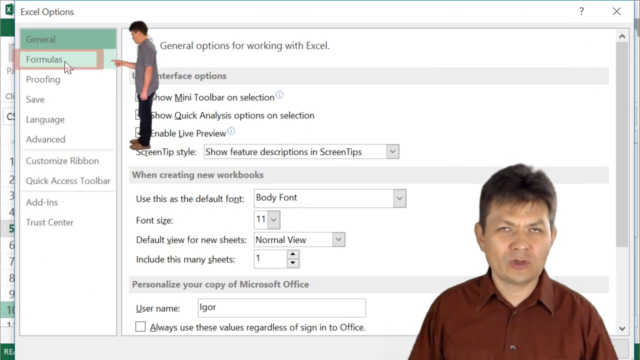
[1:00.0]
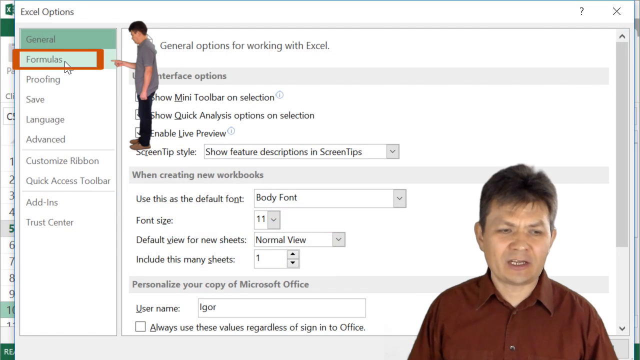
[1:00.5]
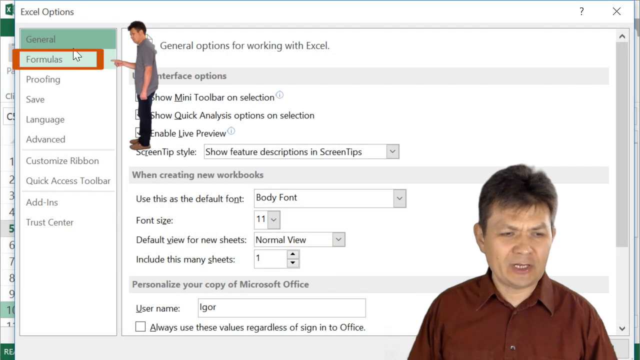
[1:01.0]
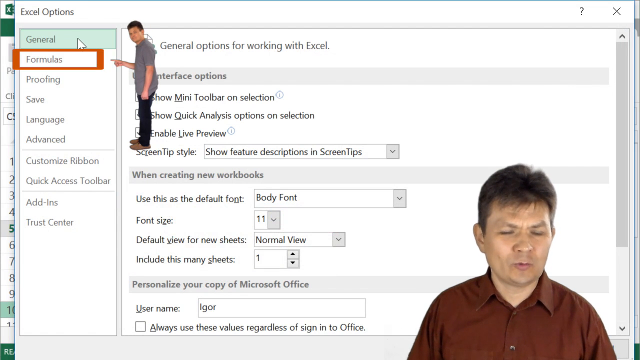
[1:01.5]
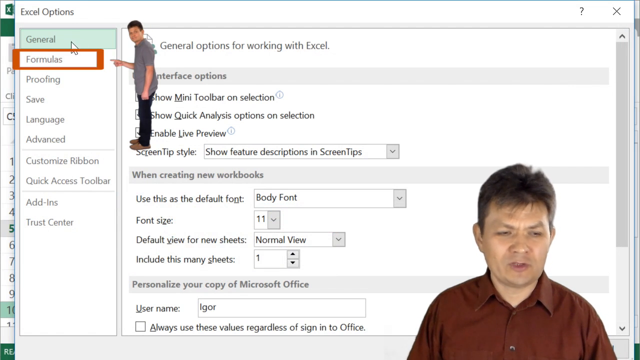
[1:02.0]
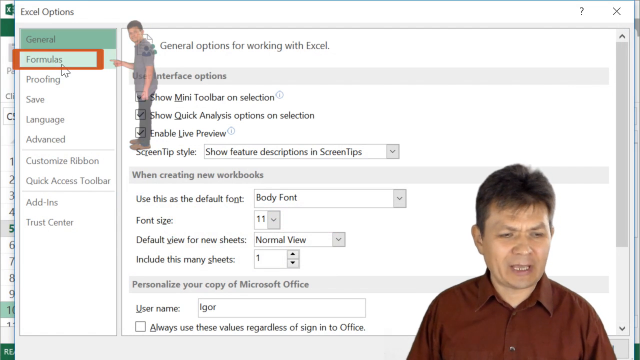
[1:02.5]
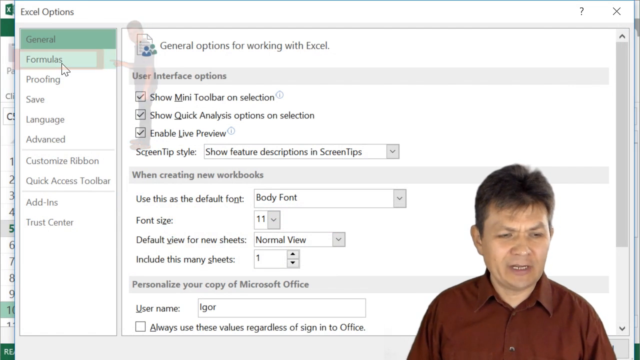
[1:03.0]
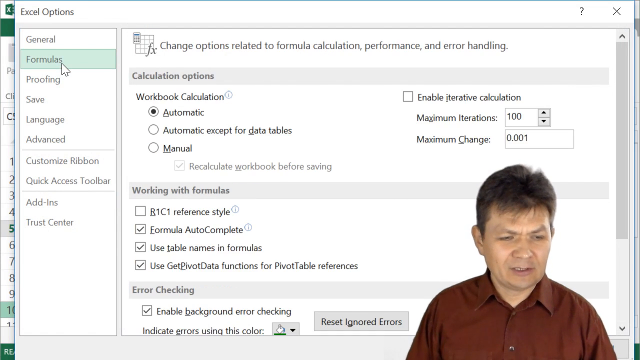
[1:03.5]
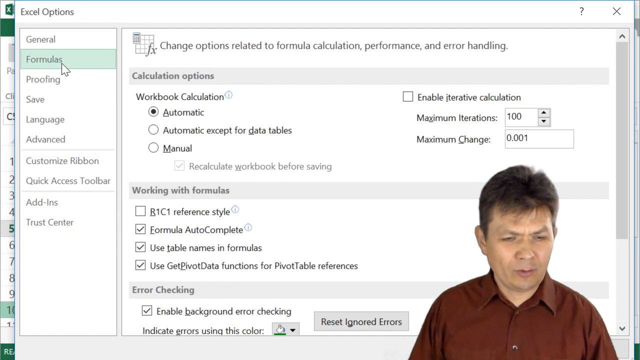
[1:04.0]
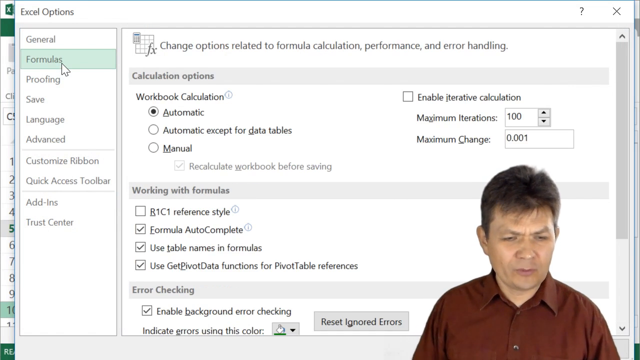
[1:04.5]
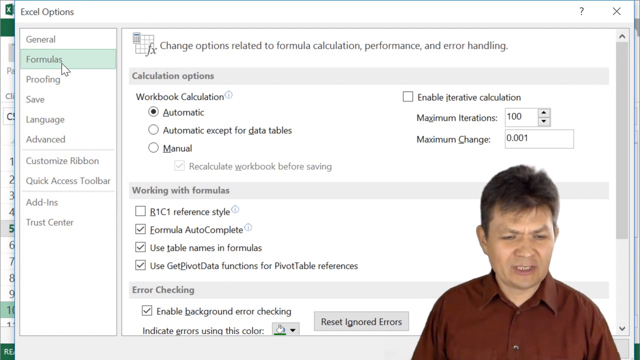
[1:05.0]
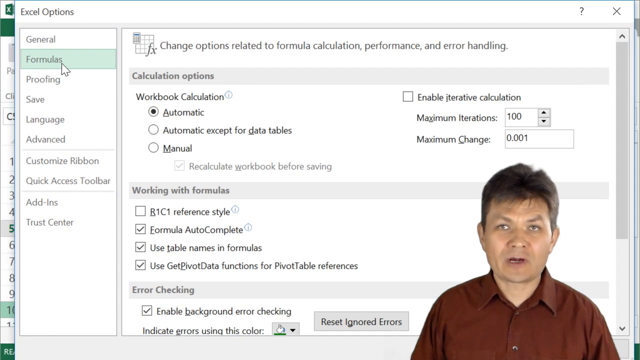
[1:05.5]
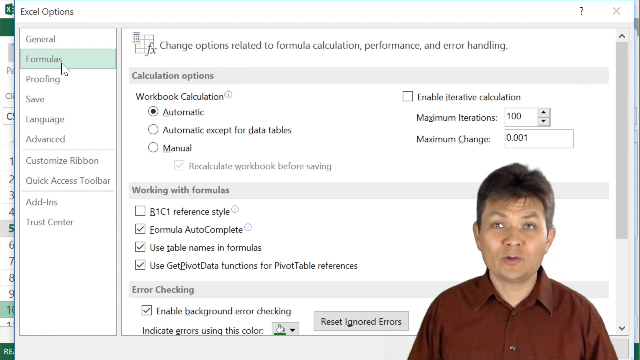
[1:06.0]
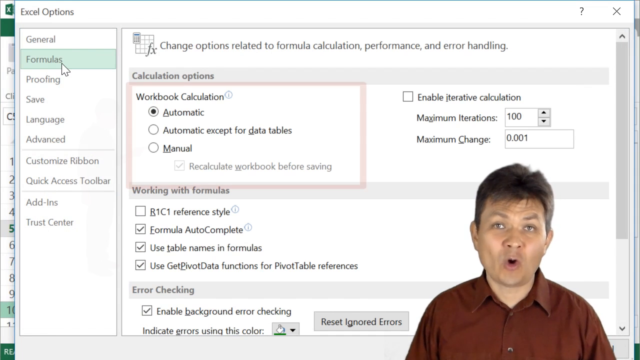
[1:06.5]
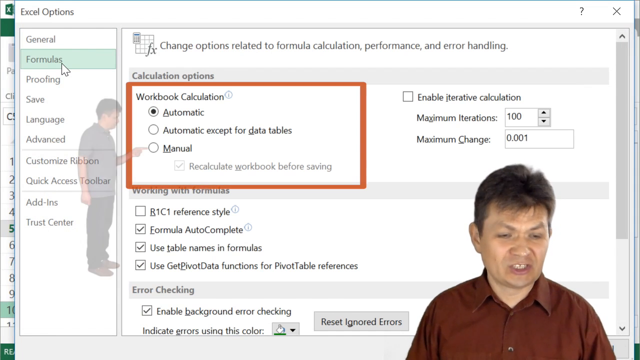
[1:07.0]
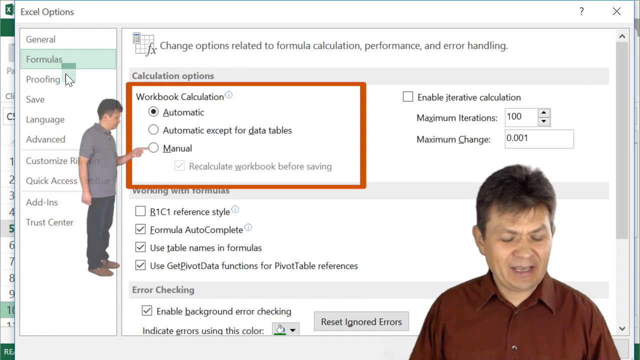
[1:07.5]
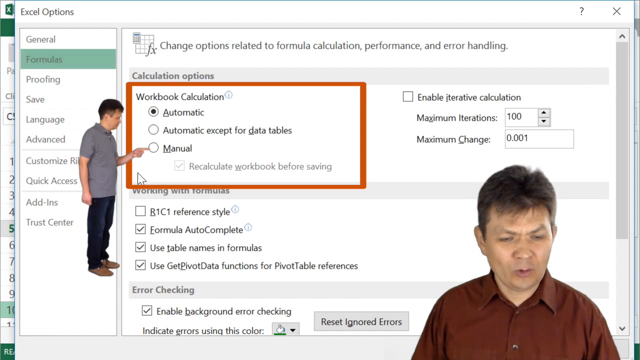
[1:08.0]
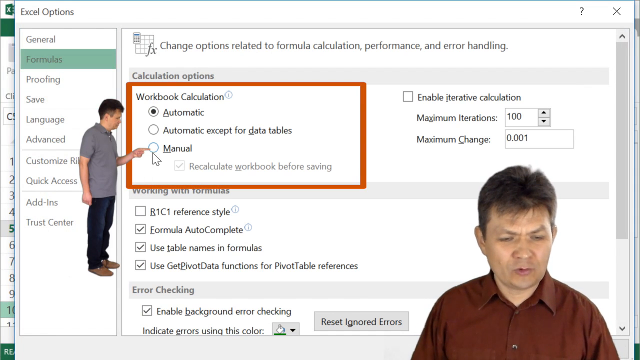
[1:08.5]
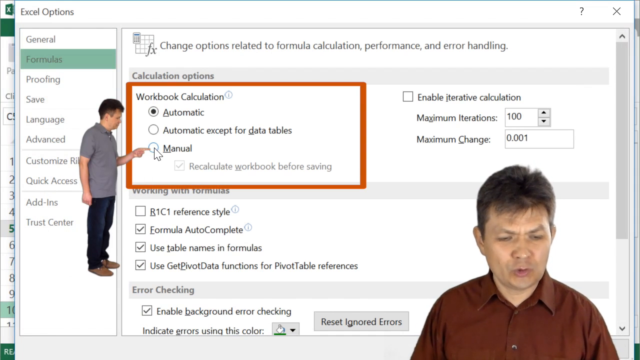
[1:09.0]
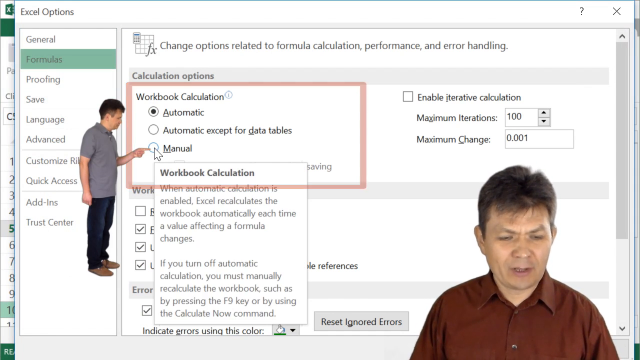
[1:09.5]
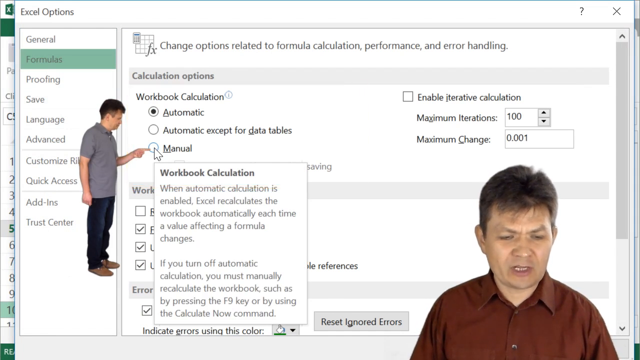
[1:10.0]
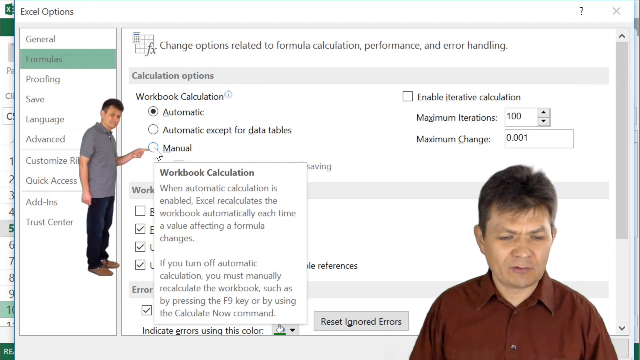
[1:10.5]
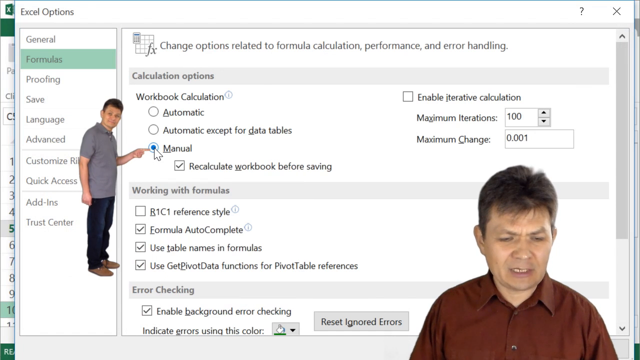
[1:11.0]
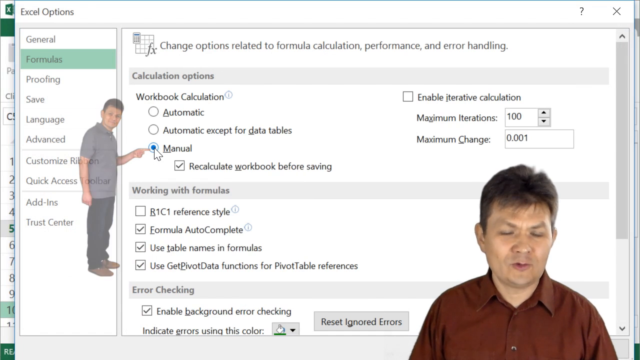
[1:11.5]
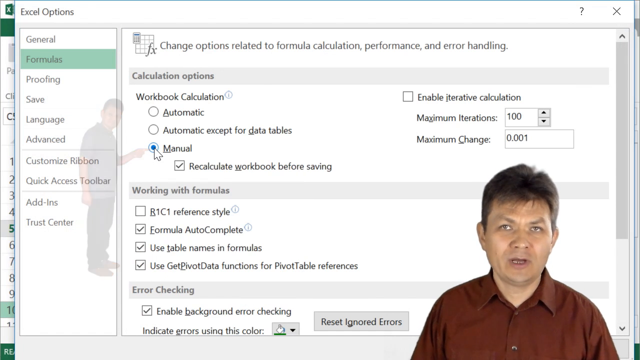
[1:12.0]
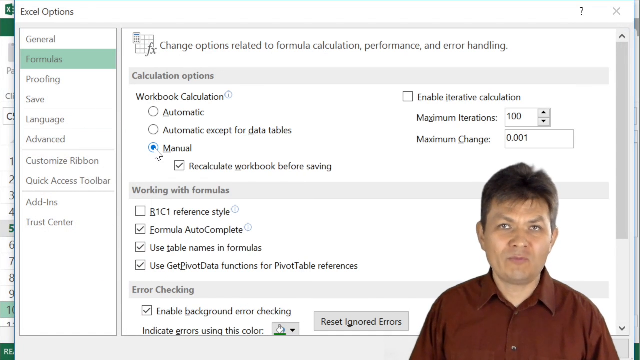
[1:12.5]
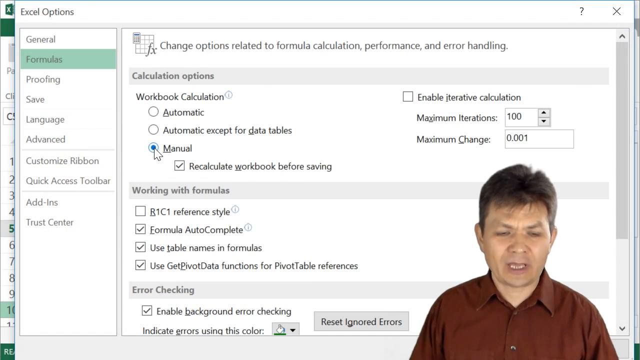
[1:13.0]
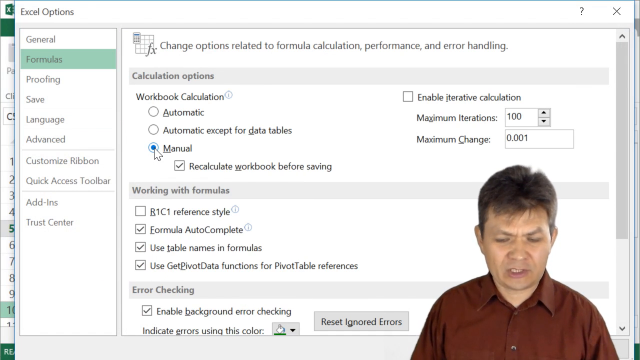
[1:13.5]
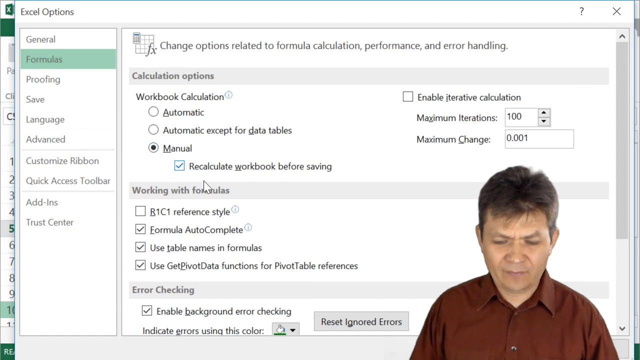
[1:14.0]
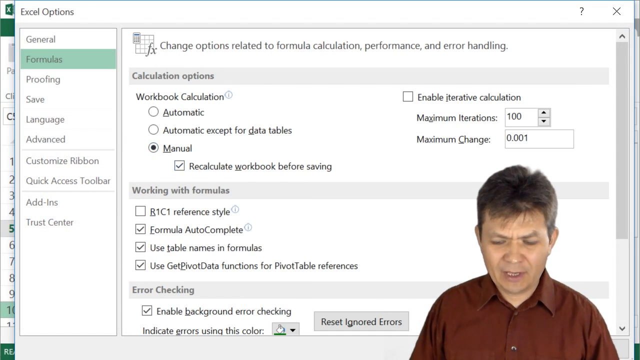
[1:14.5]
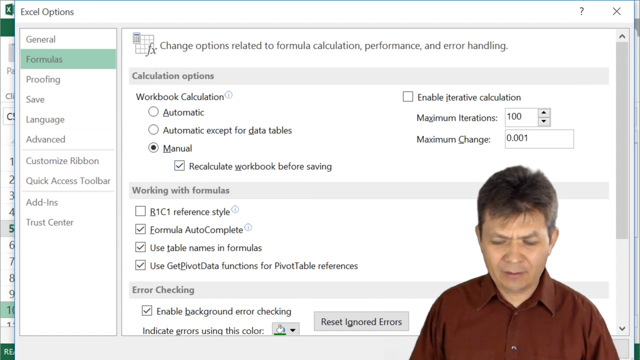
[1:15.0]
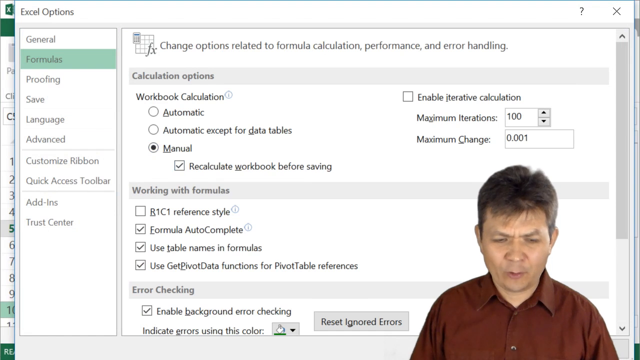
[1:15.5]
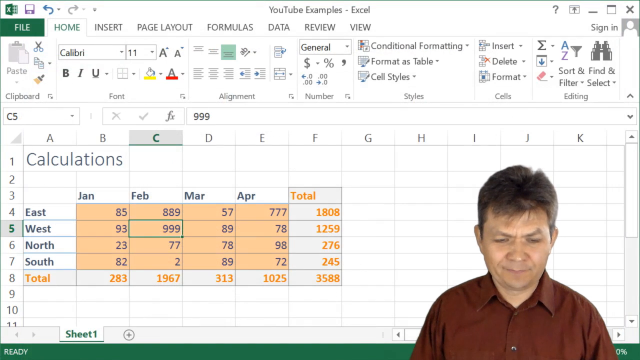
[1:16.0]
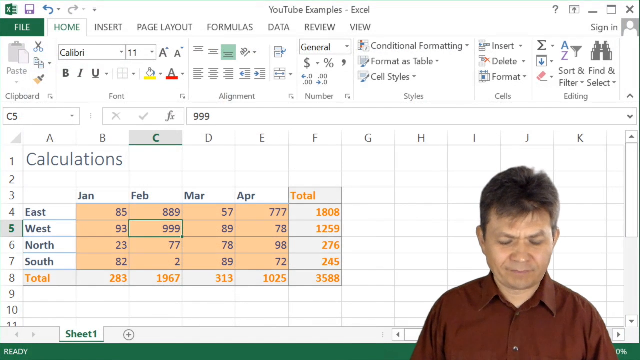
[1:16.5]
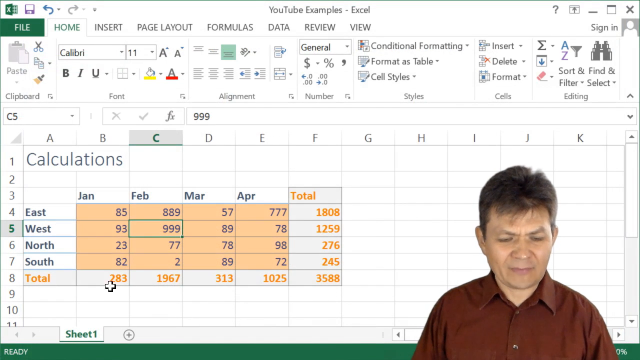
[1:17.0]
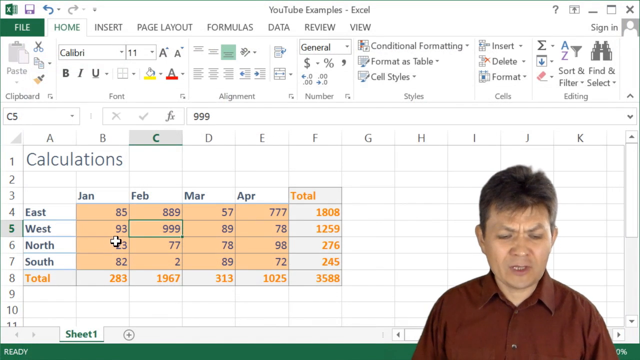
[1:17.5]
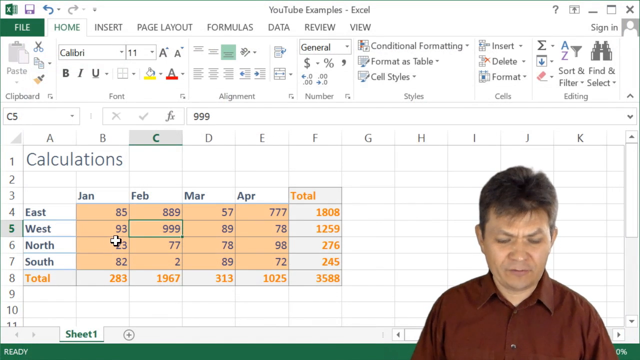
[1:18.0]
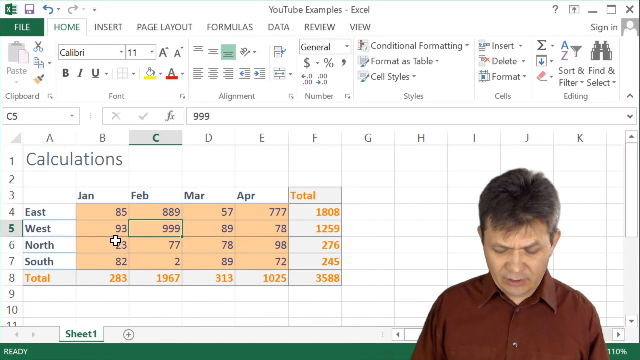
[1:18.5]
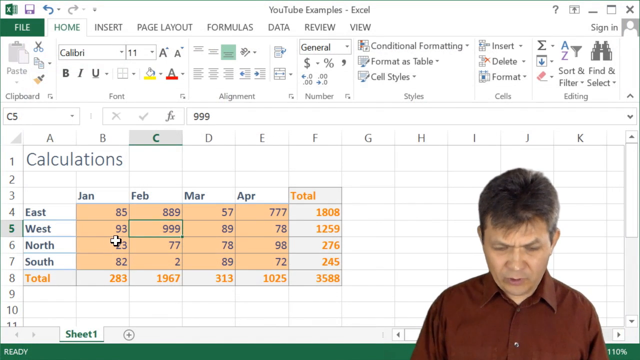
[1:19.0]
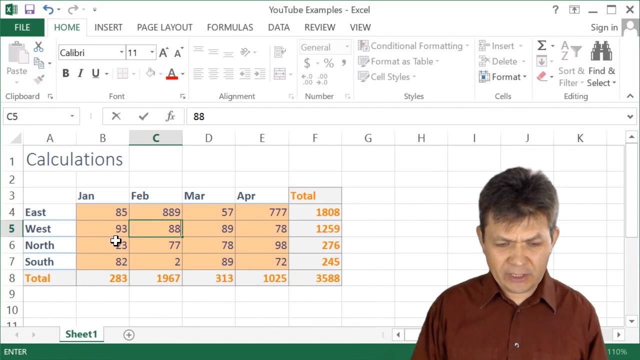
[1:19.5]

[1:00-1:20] The path File, Options, General, Formulas leads to the calculation options, which include Automatic variants and Manual.